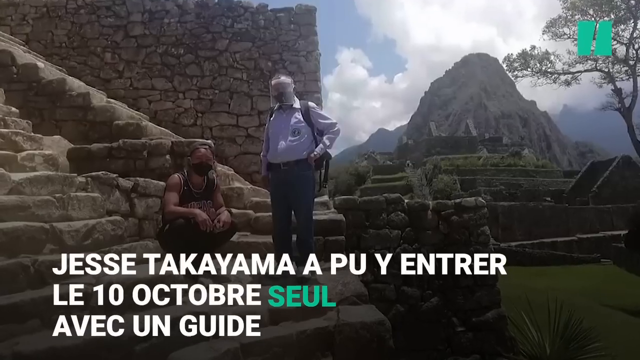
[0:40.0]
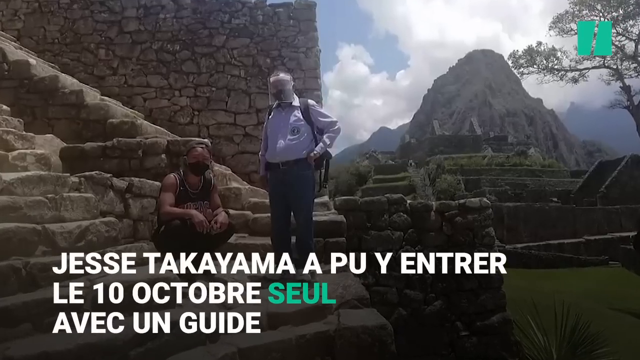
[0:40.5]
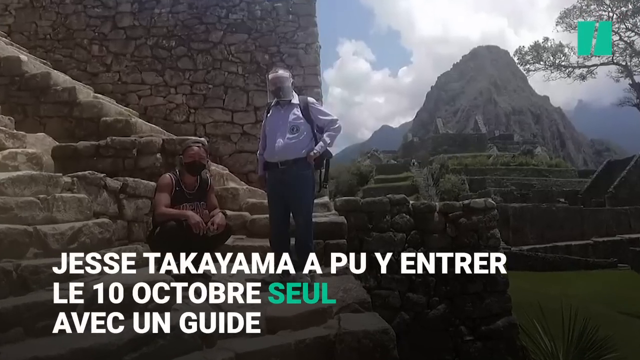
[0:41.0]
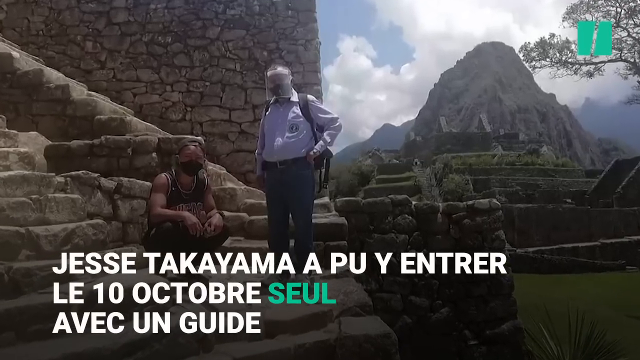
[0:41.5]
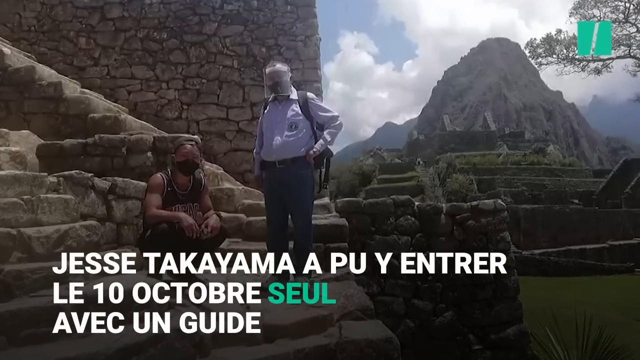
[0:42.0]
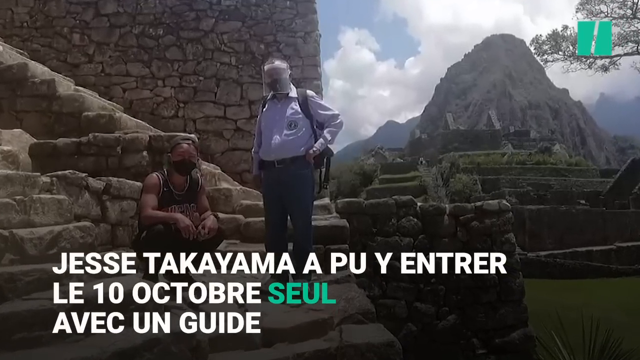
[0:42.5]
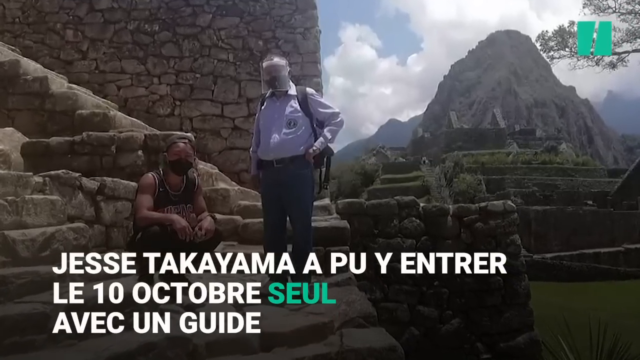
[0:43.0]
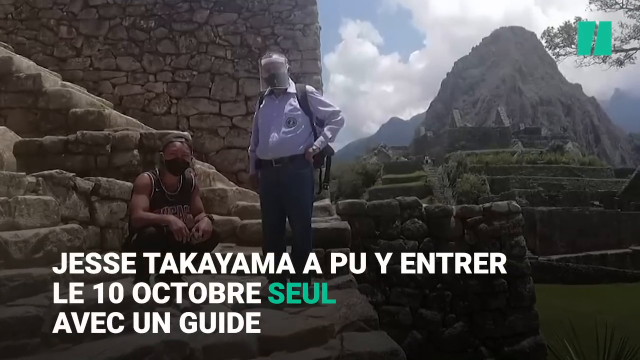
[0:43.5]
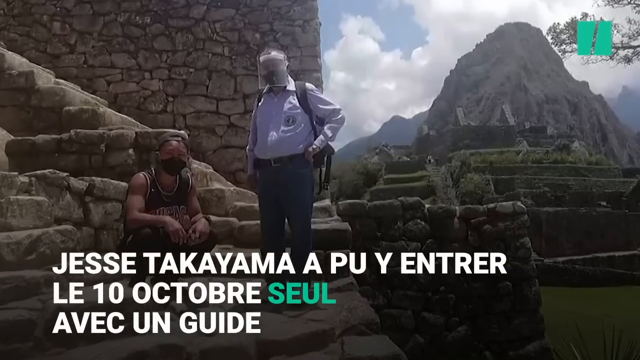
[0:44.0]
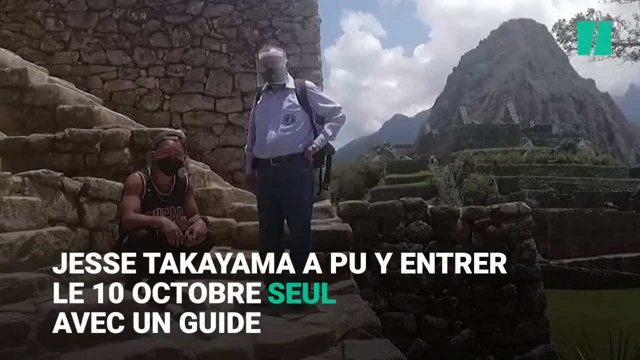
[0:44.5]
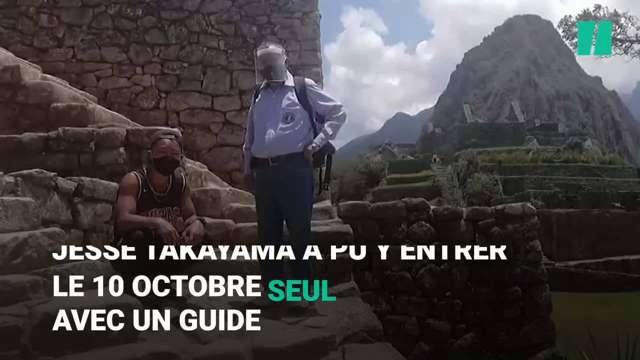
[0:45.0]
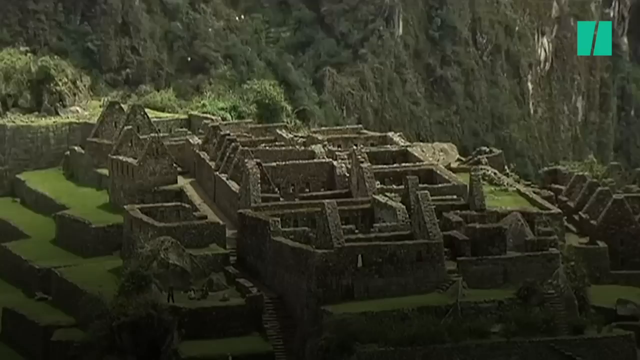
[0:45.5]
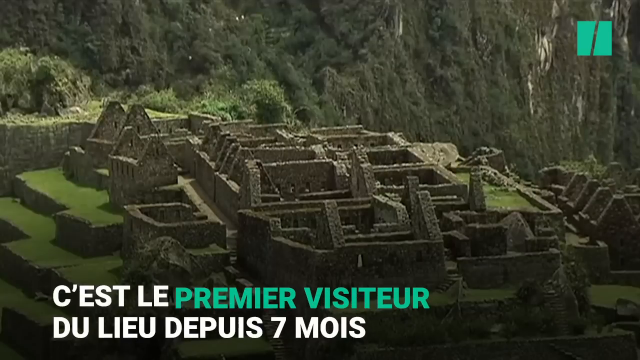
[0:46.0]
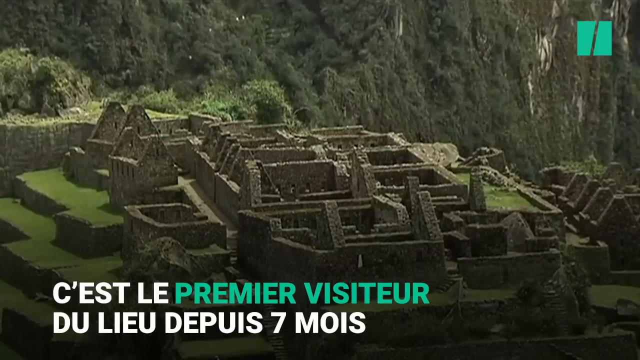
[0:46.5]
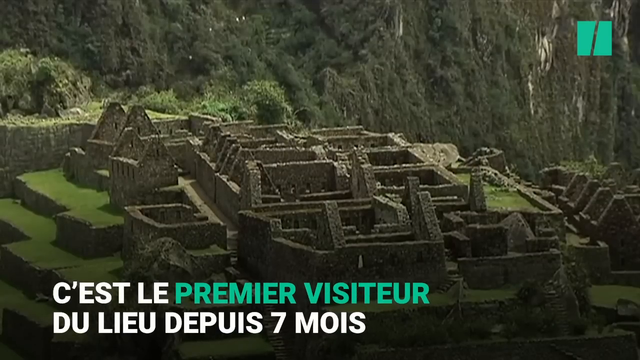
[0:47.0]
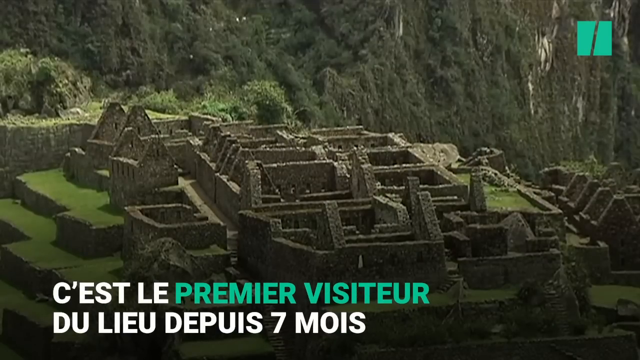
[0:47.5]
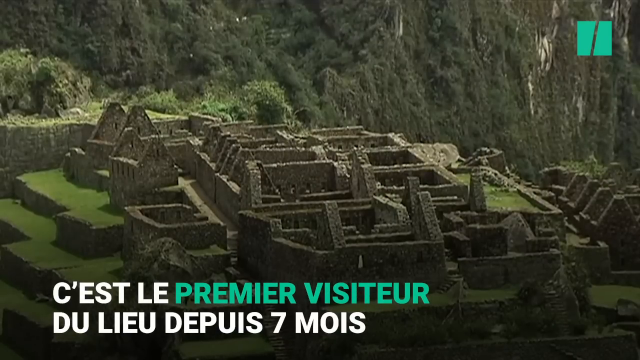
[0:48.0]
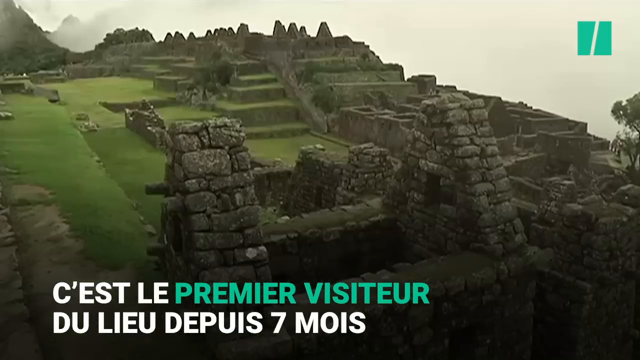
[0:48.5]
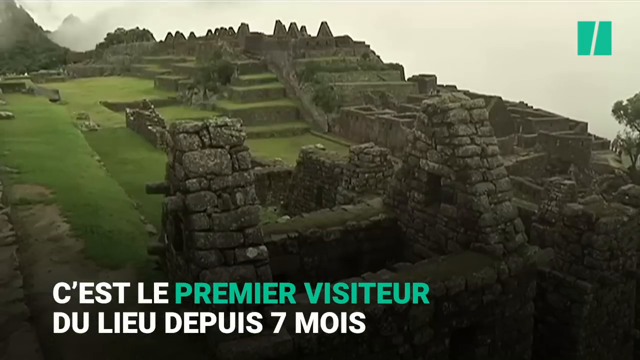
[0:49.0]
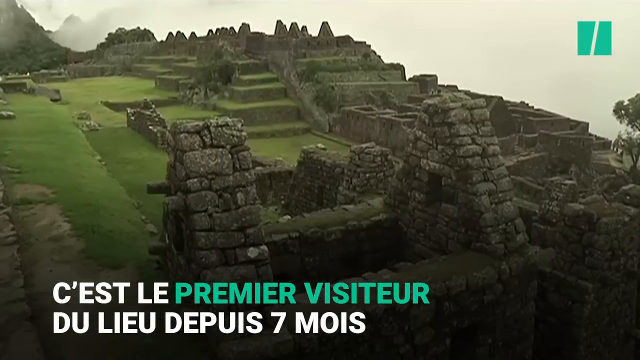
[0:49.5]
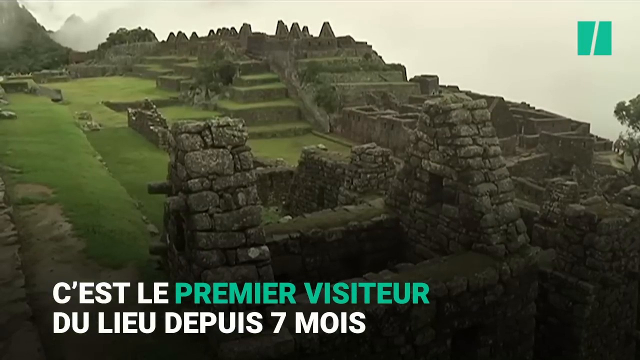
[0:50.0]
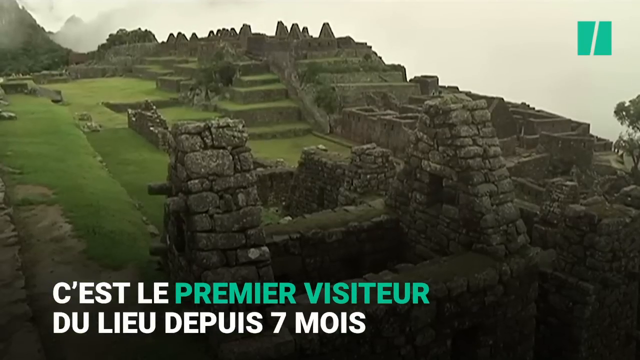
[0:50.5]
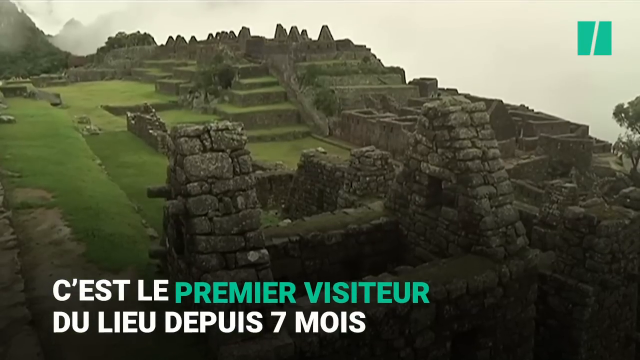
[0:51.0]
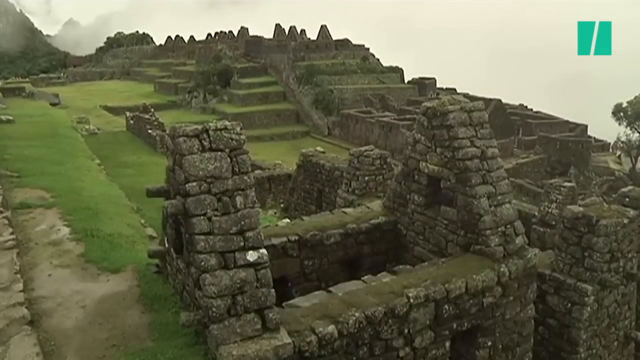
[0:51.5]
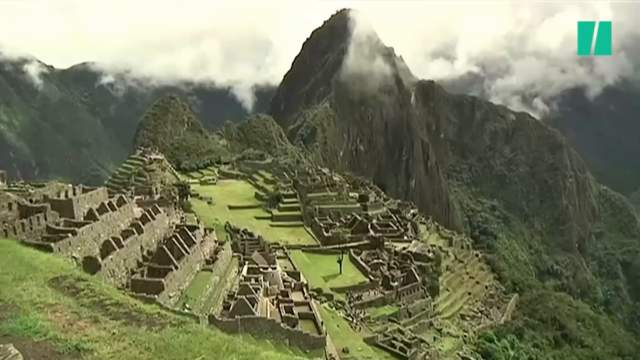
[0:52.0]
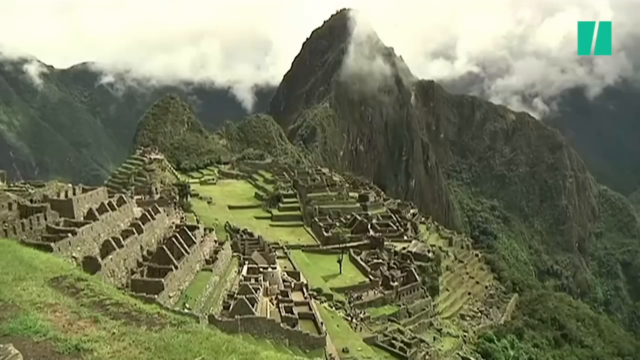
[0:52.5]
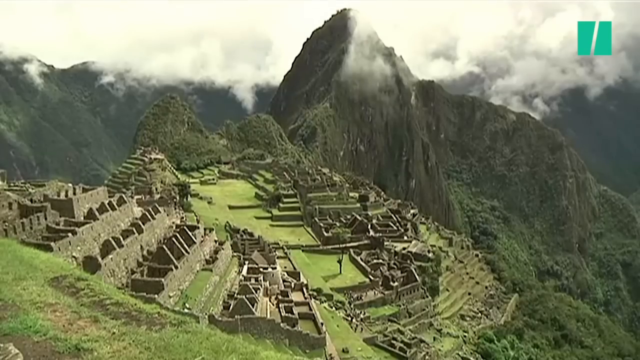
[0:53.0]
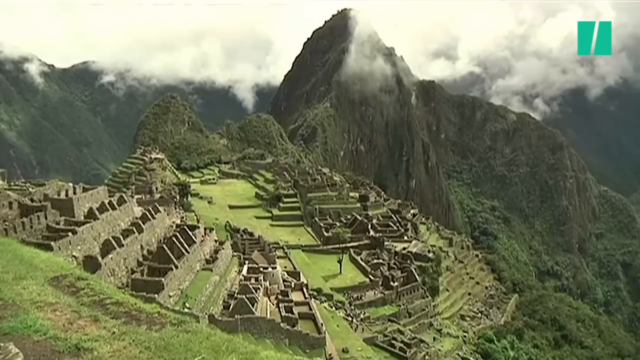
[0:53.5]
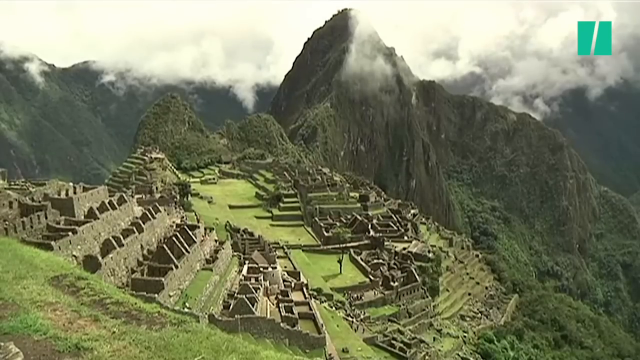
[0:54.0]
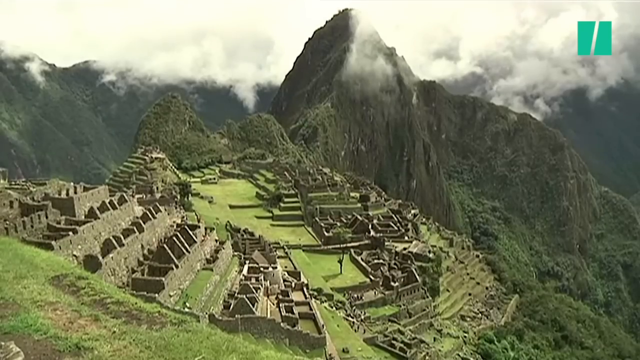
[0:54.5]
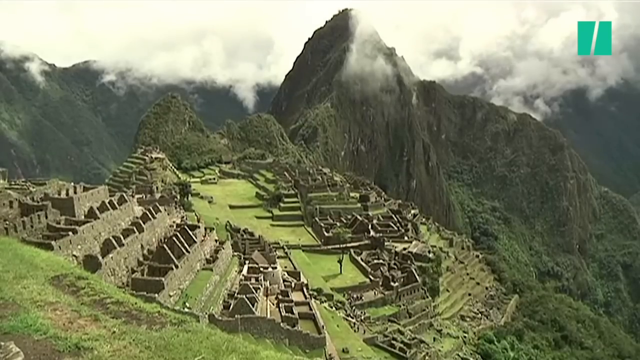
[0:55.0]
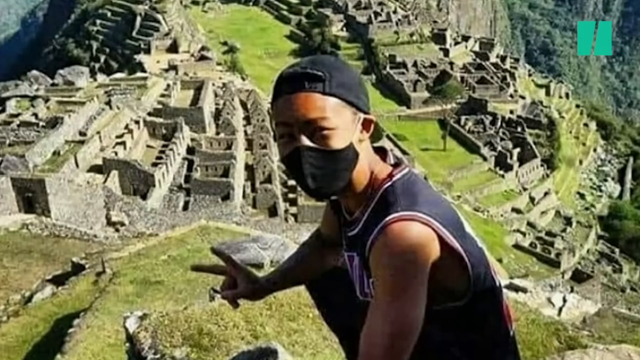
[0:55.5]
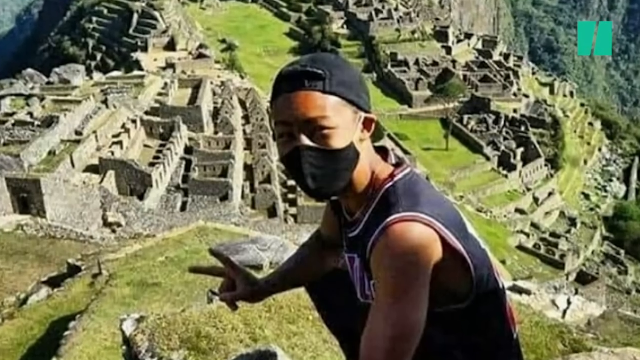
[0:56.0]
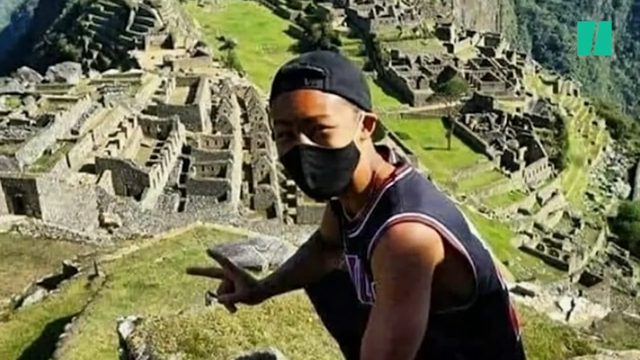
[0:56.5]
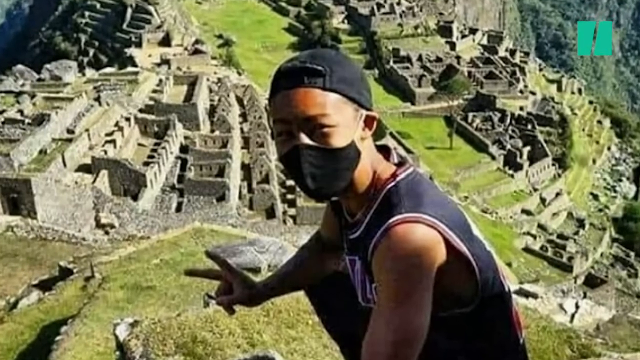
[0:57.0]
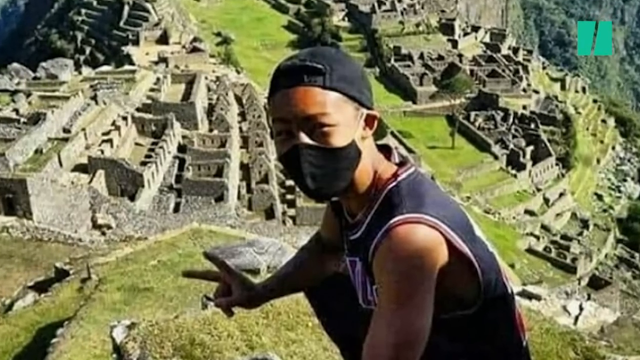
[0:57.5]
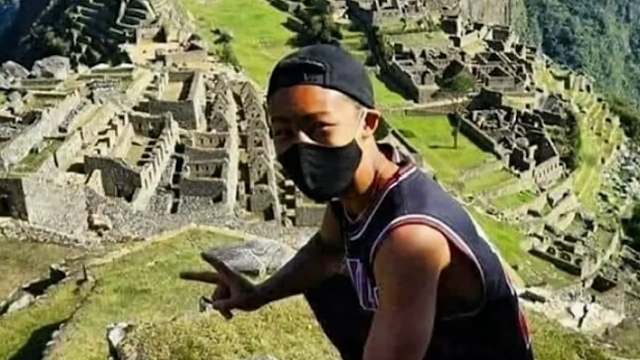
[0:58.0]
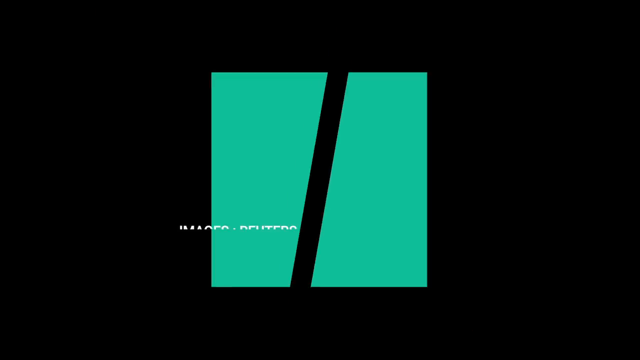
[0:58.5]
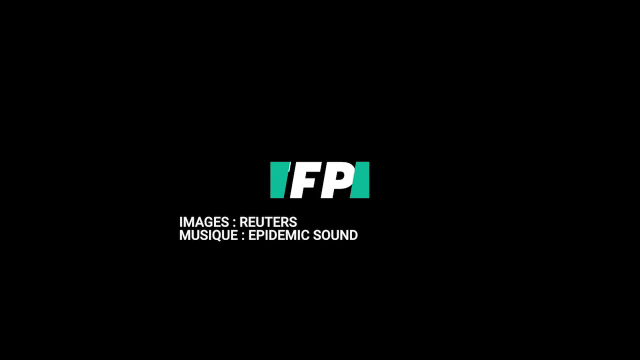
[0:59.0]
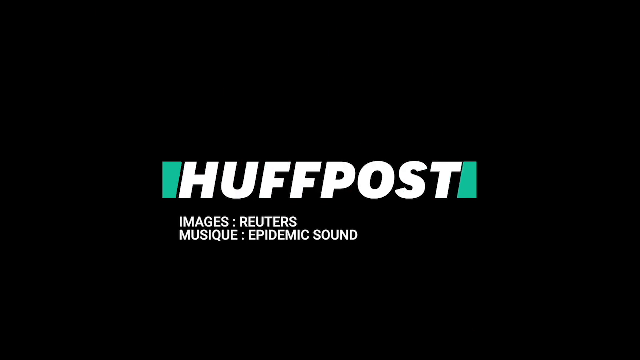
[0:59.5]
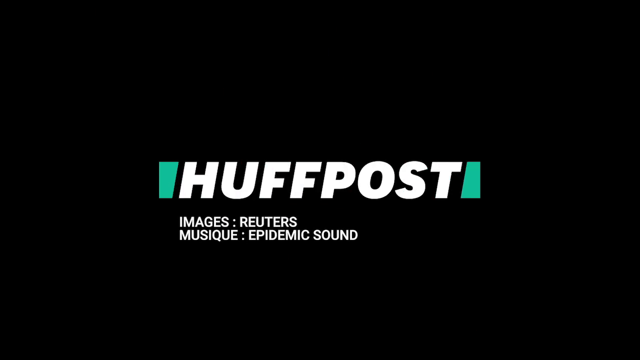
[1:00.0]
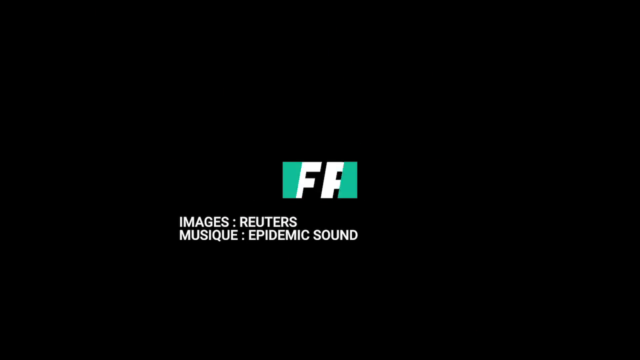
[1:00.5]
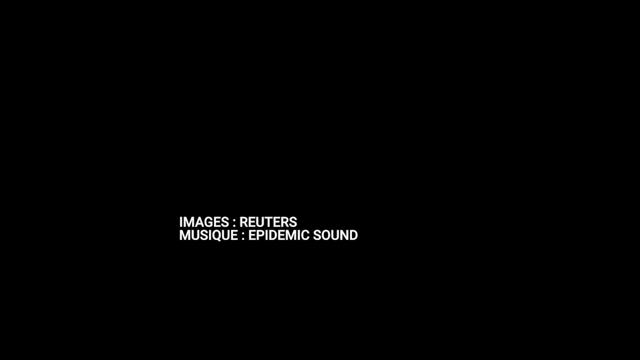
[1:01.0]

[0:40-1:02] A top view shows what is possibly where he was: a maze-like layout, possibly a group of houses connected together but separated by thin walls, with different pathways and a staircase going up. There are possibly around 15 houses right underneath the mountains, surrounded by many trees. The houses or buildings have no roofs and look very simple. A title appears saying something about "premier visitors". The view then pans to a photo of the man again in his black hat, black mask and jersey, holding up a peace sign in front of the area. The video then shows that it is from Huff Post.